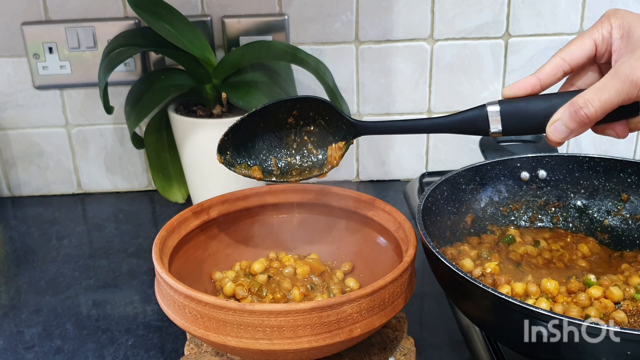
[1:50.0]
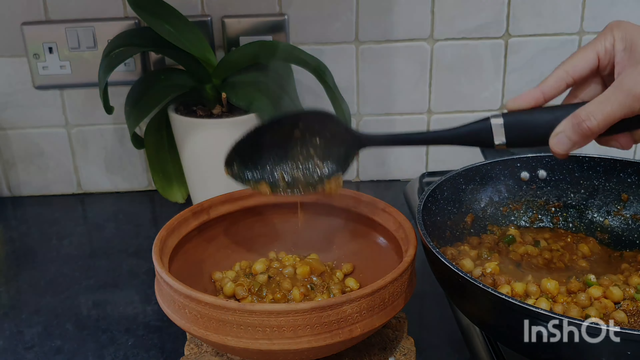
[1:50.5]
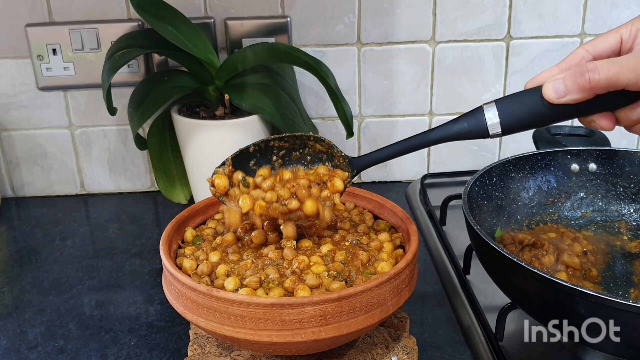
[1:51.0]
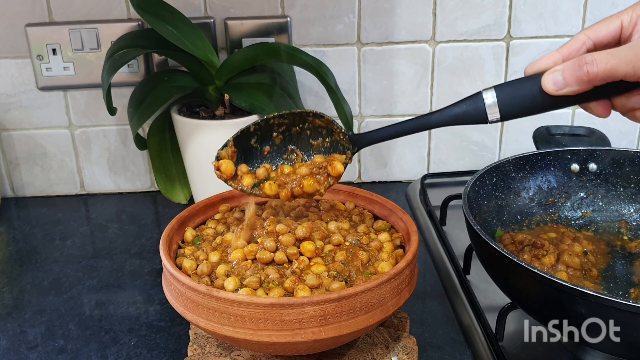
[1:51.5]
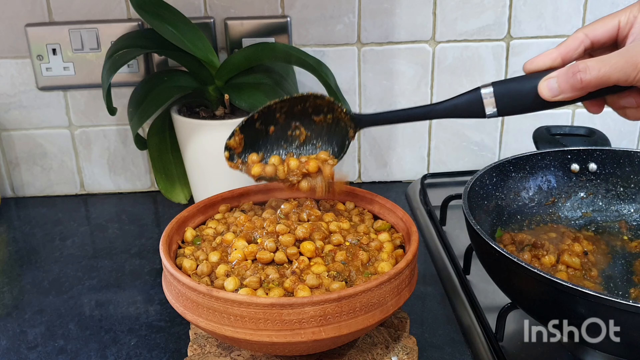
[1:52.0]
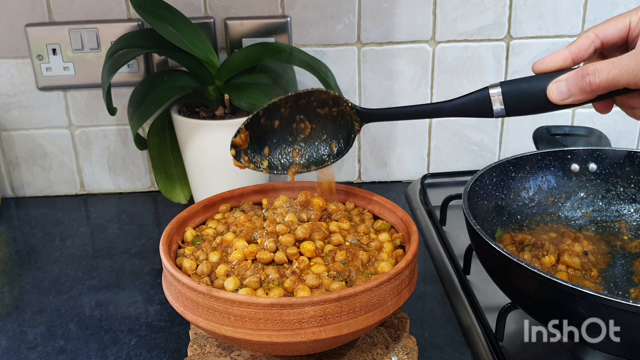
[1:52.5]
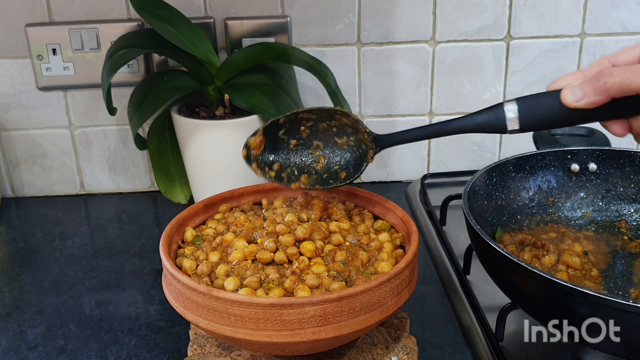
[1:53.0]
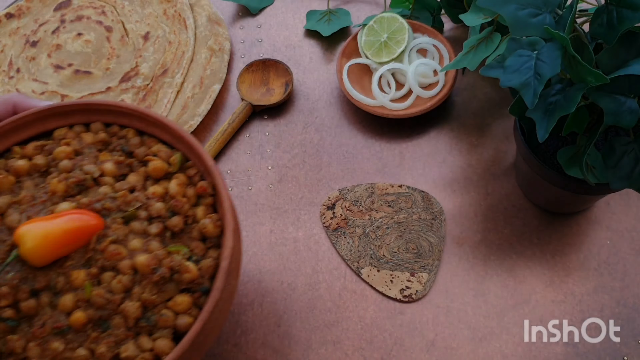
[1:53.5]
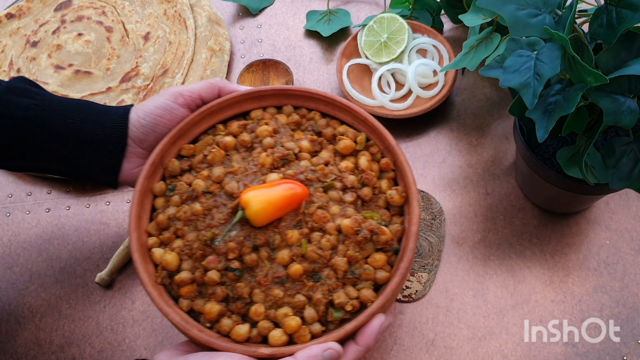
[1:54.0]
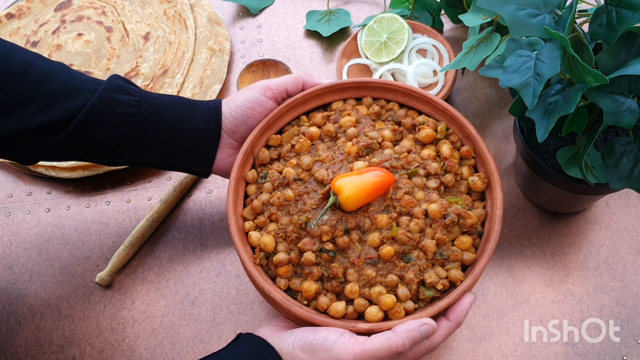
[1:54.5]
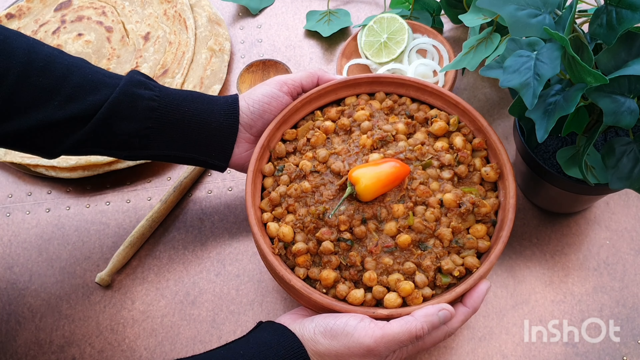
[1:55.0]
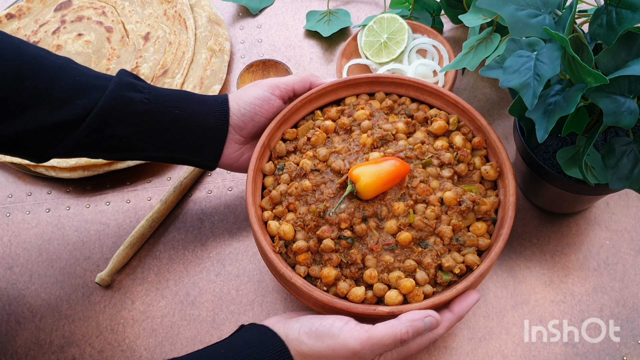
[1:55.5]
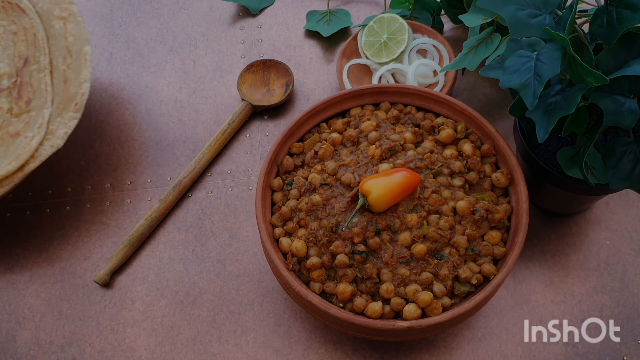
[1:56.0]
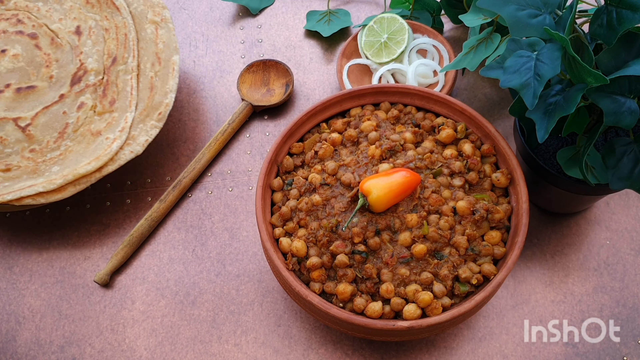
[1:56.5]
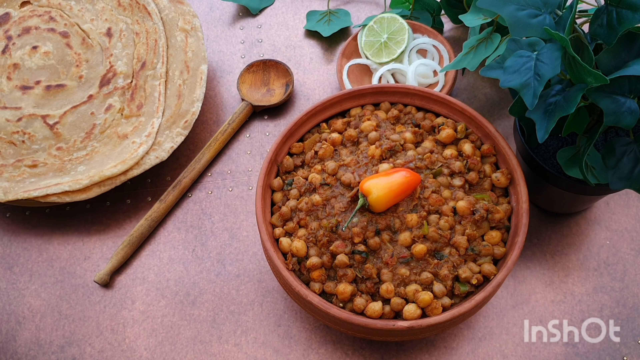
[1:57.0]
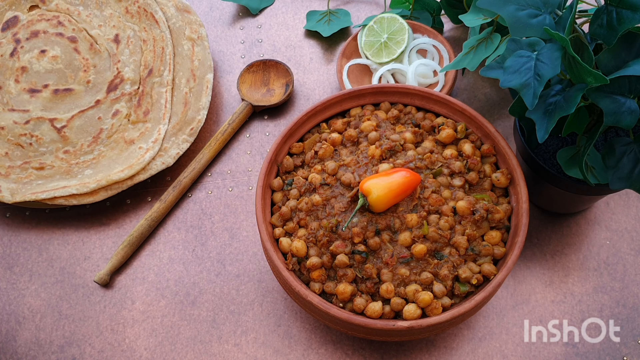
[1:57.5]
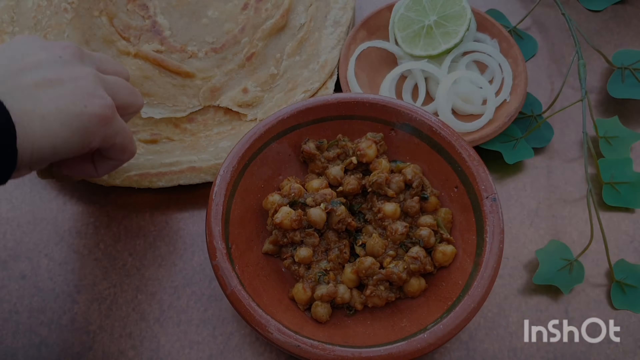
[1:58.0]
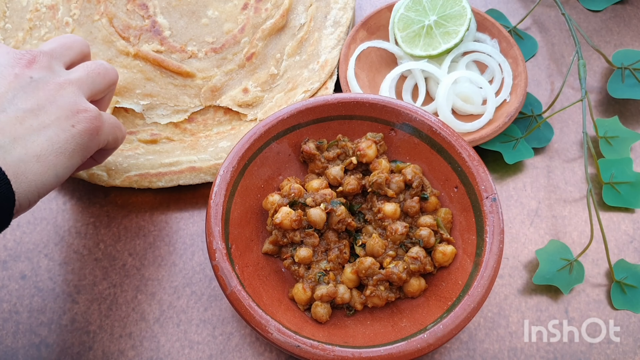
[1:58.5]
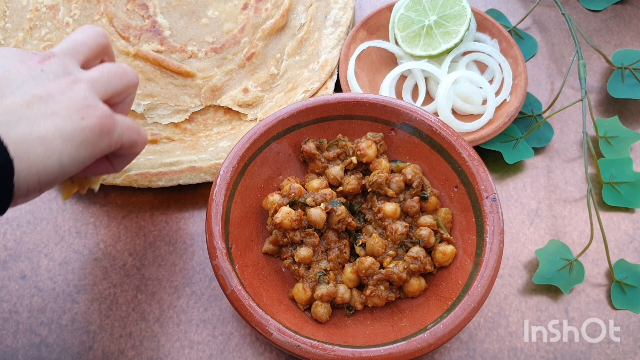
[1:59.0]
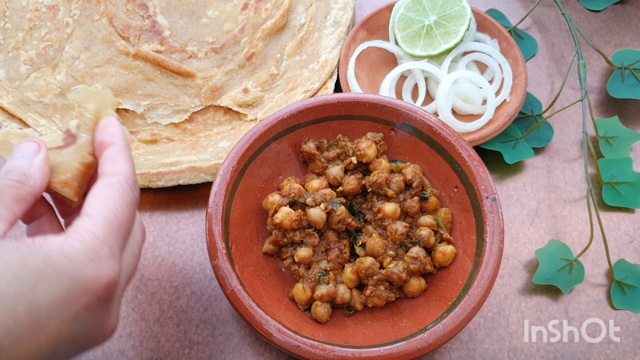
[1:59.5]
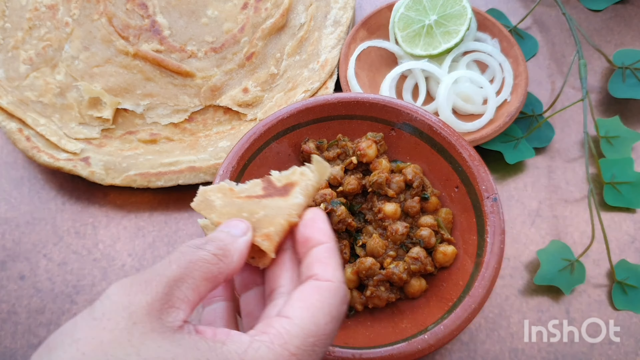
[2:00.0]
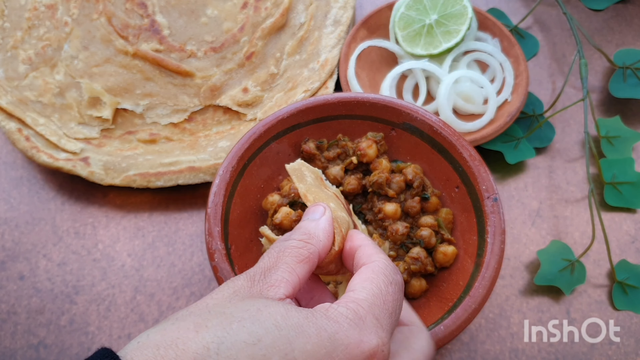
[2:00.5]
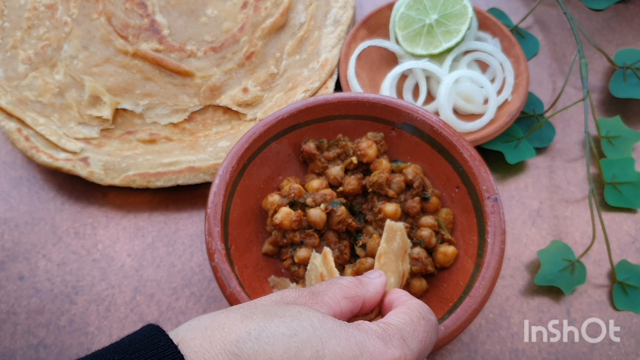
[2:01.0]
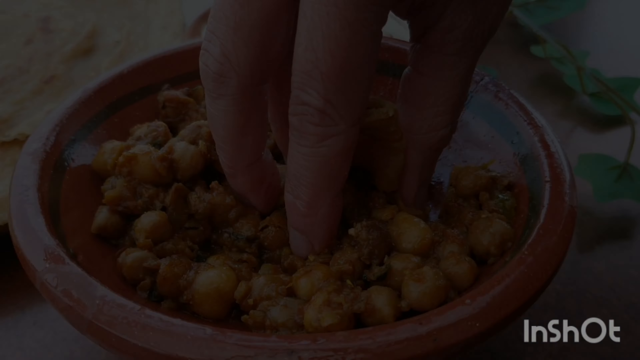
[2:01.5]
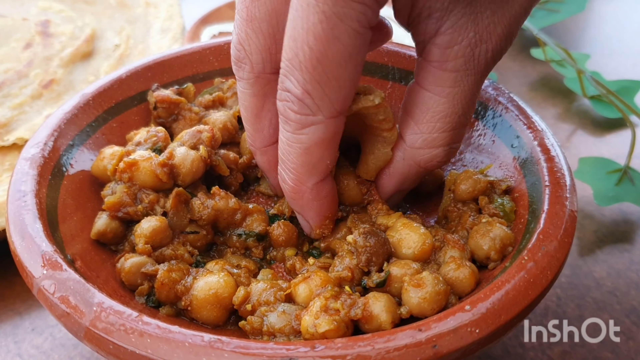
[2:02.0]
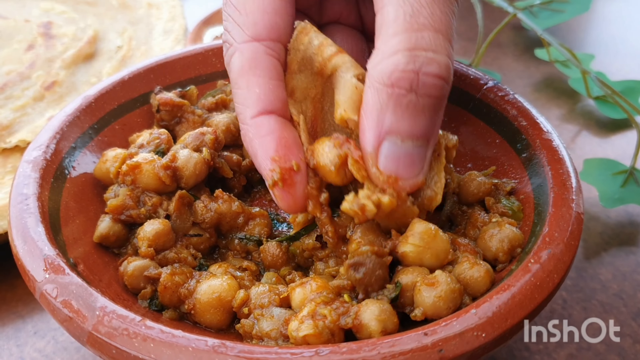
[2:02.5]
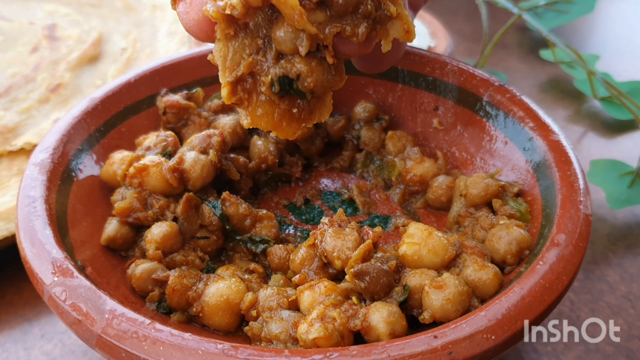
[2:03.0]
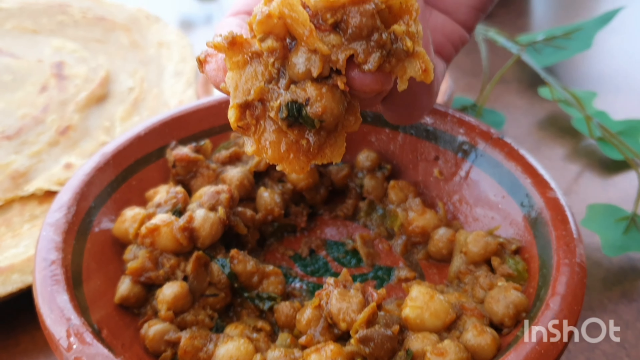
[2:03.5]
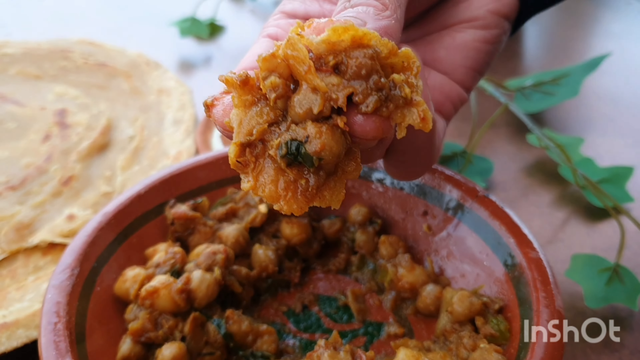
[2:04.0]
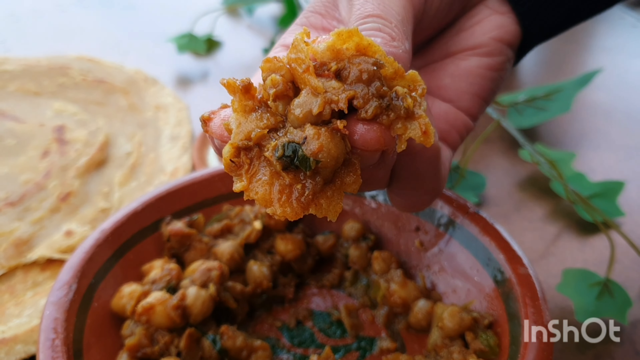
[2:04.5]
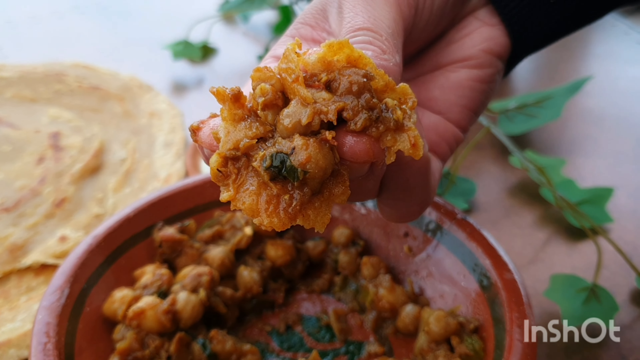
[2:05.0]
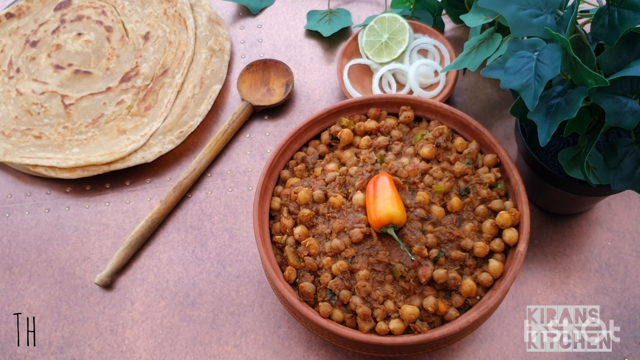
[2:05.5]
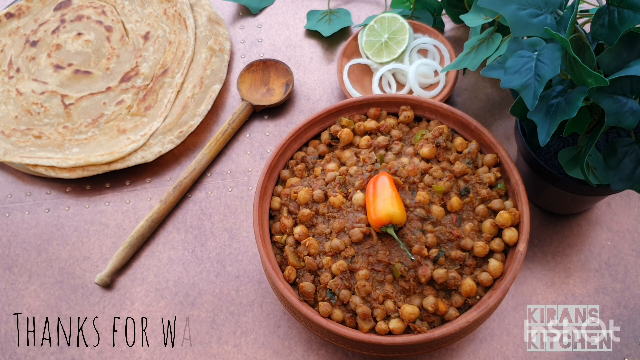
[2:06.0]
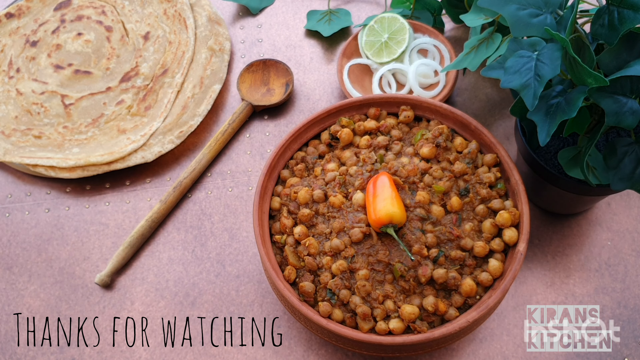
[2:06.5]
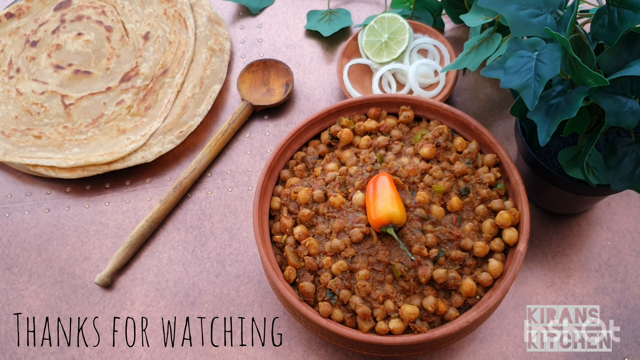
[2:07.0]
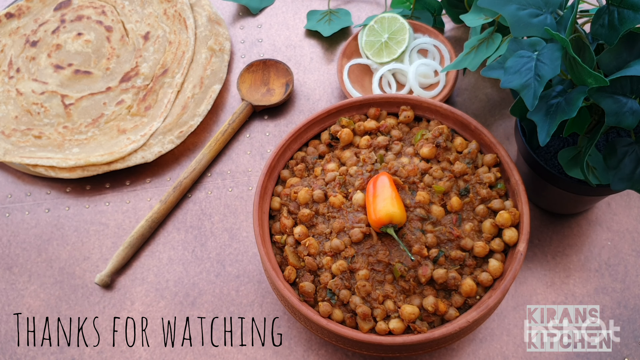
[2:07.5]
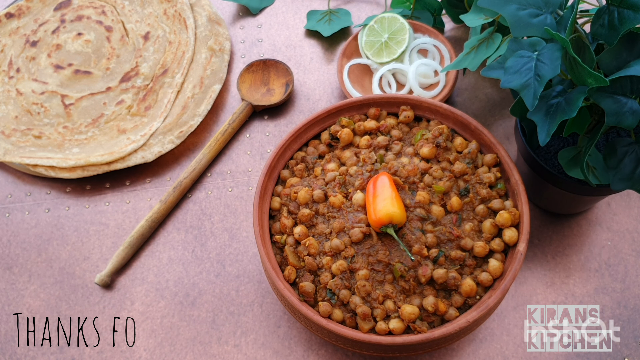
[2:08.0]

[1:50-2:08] The cook continues to spoon the mixture into the tagine and takes the bowl to the table. At the table the food looks much drier, and it appears to have been spooned into a smaller bowl. Plugs are visible in the kitchen, suggesting it is probably a British kitchen. The name InShot is still shown. On the table, along with the chickpea mixture, there are onions, wraps and the wooden spoon, now washed. A plastic spoon of some kind was used to move the mixture into the tagine. Leaves decorate the table on a pink cloth. Someone breaks off a piece of wrap and scoops up food to eat it.